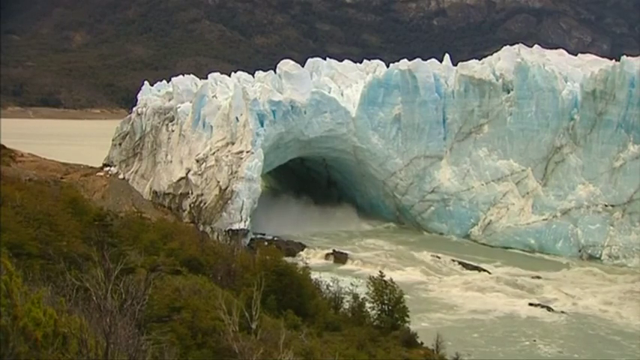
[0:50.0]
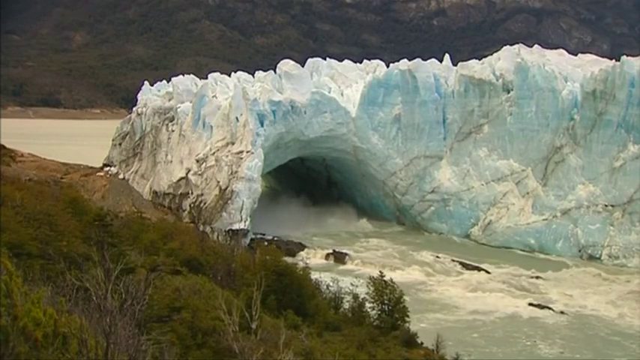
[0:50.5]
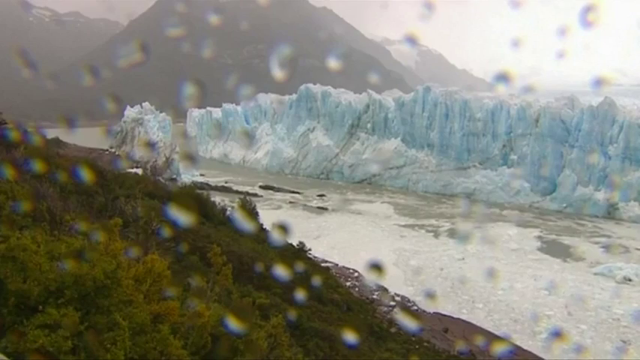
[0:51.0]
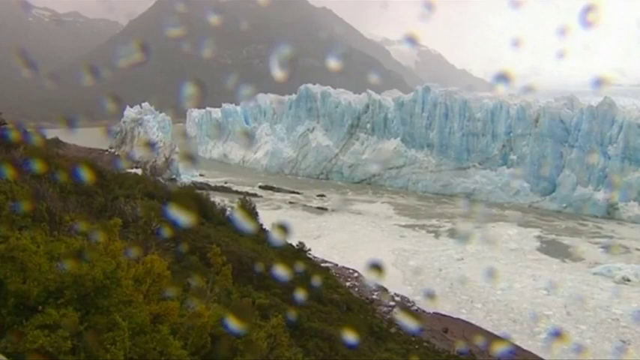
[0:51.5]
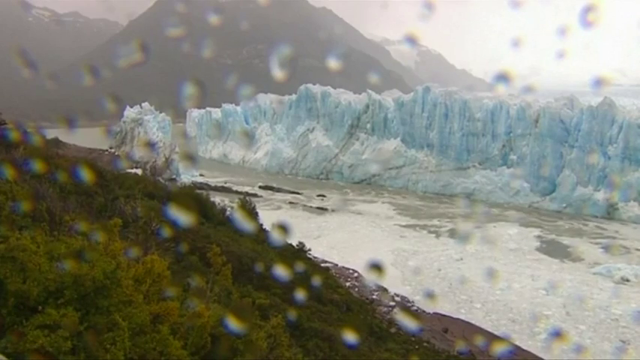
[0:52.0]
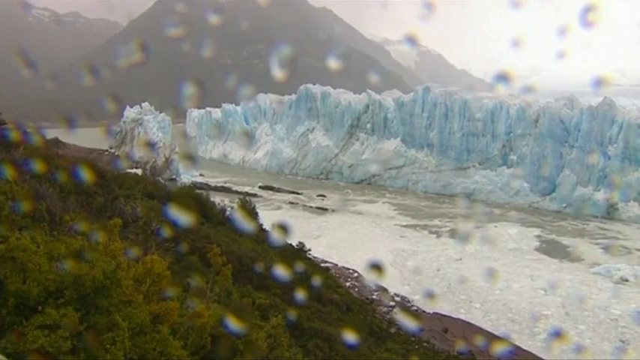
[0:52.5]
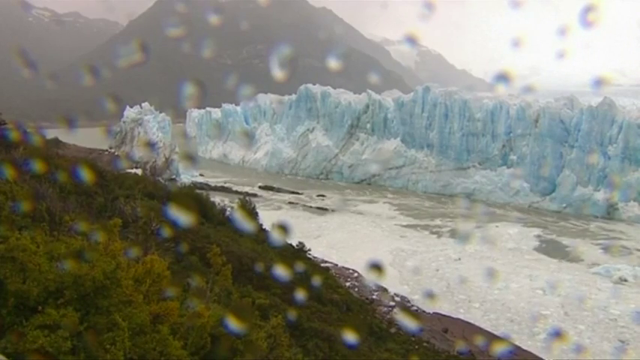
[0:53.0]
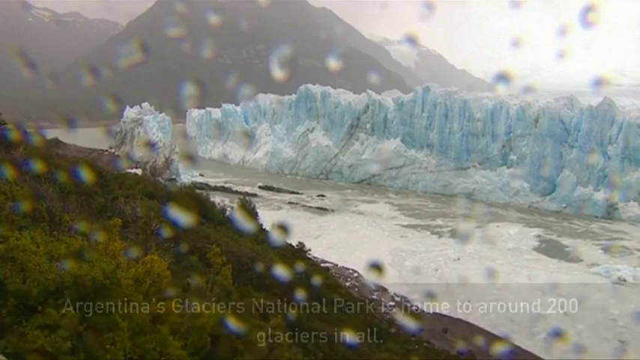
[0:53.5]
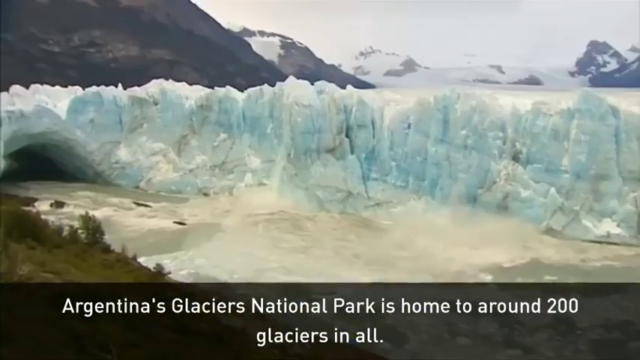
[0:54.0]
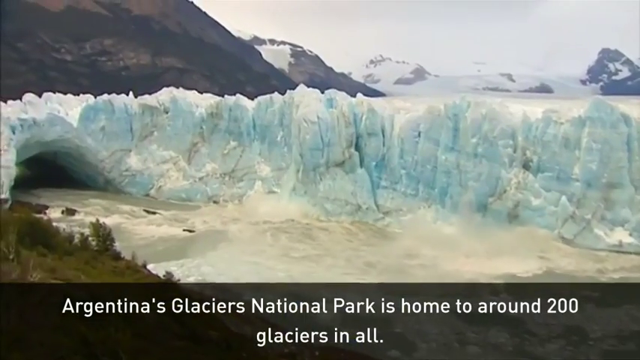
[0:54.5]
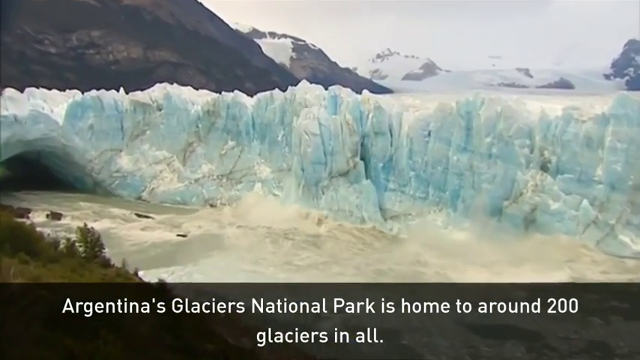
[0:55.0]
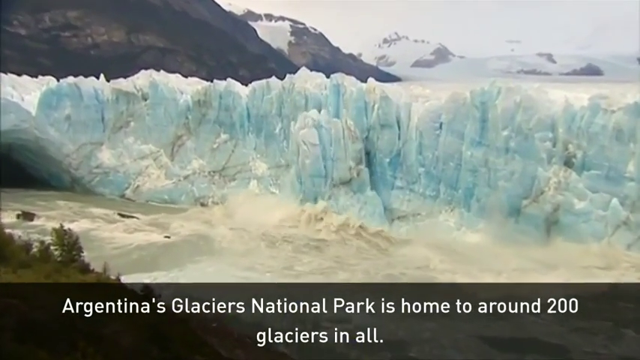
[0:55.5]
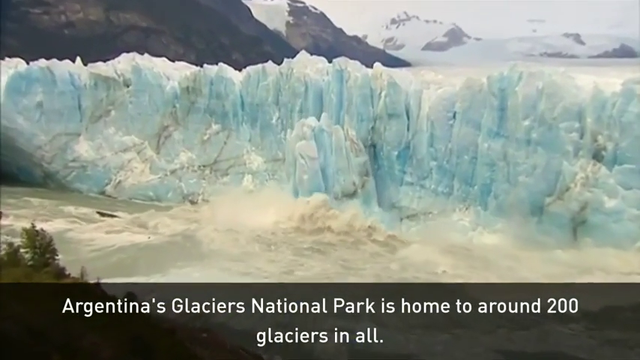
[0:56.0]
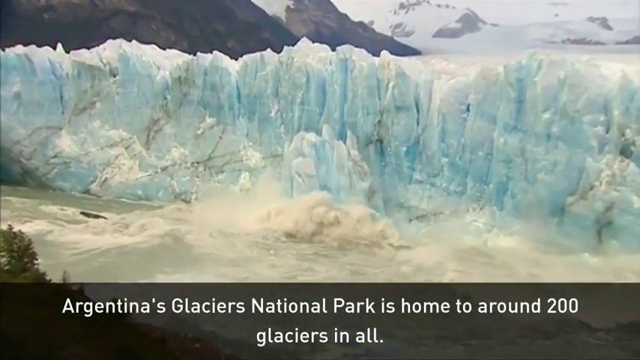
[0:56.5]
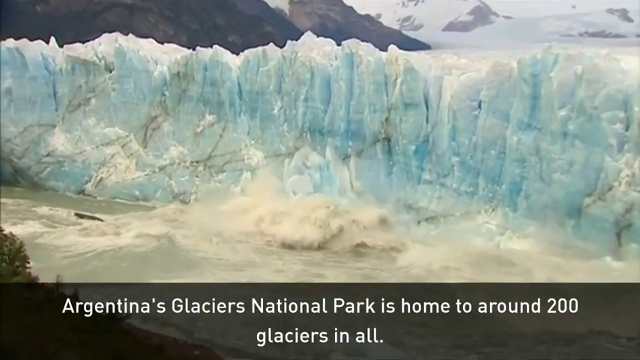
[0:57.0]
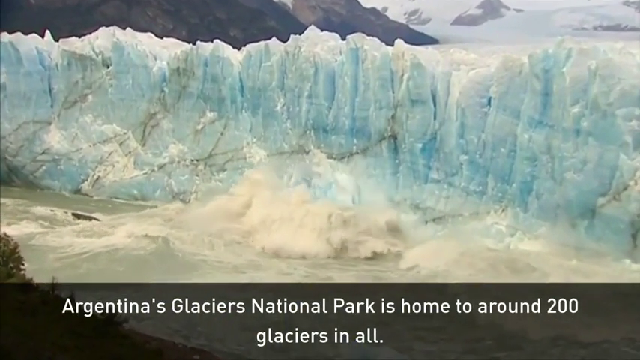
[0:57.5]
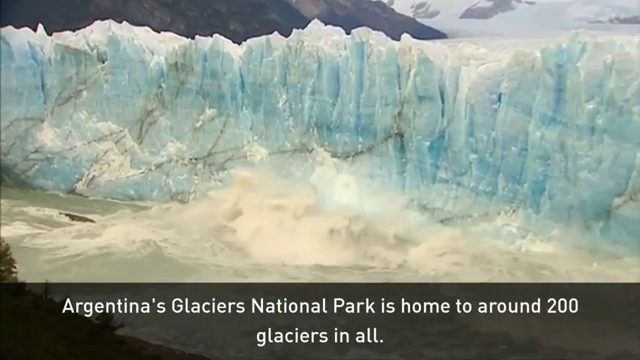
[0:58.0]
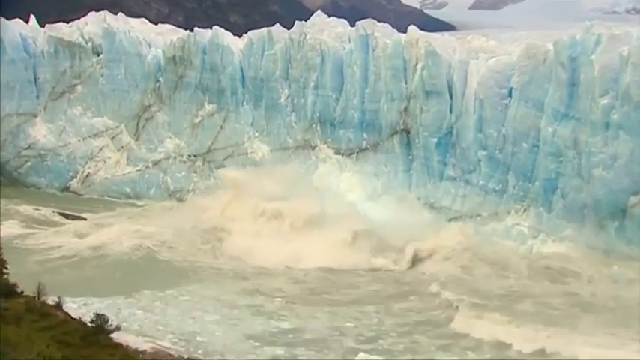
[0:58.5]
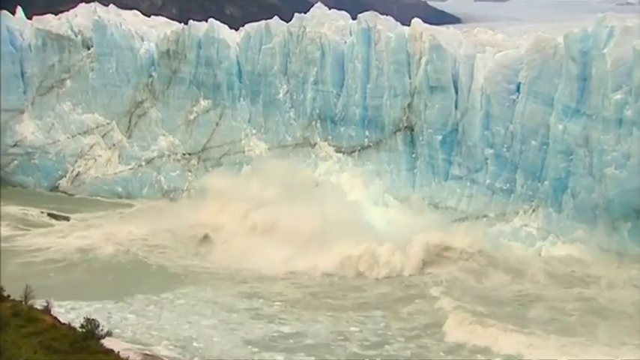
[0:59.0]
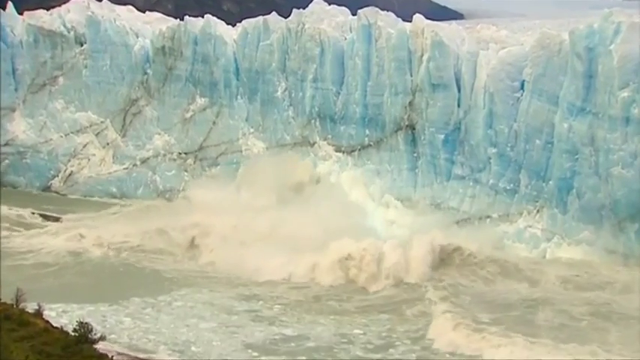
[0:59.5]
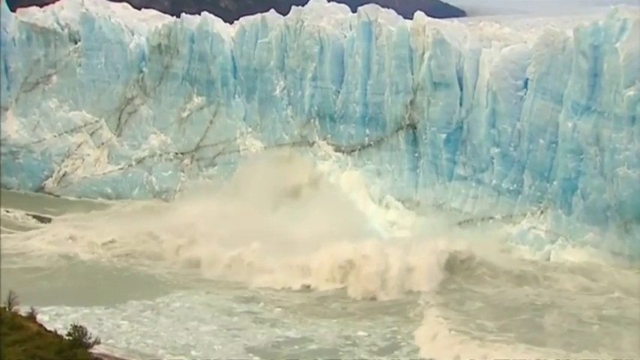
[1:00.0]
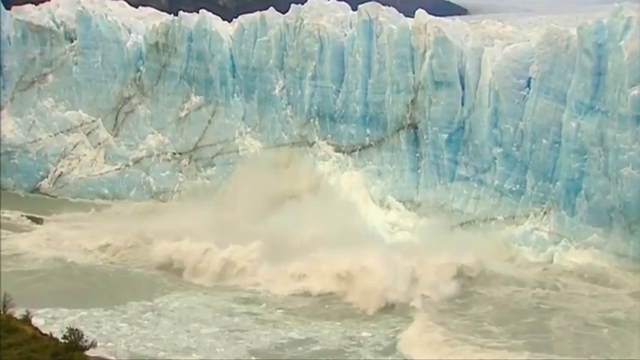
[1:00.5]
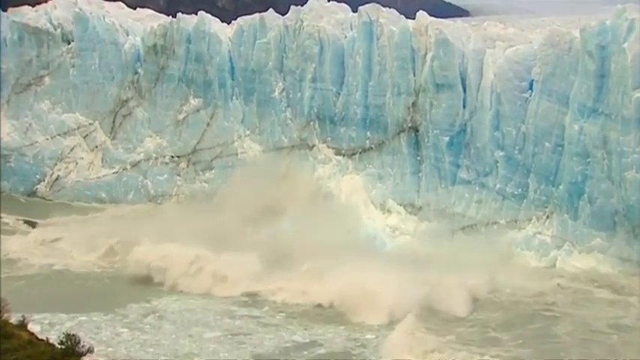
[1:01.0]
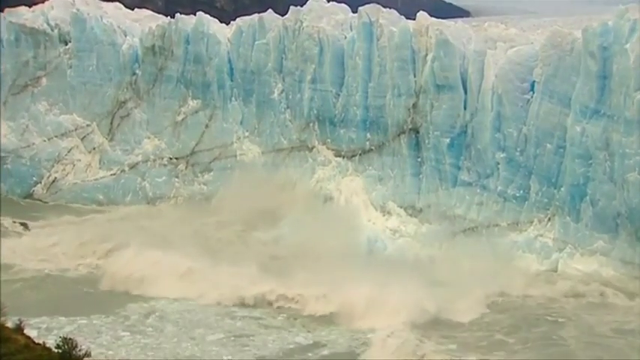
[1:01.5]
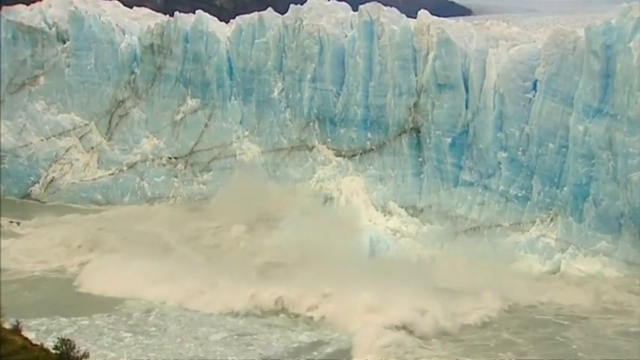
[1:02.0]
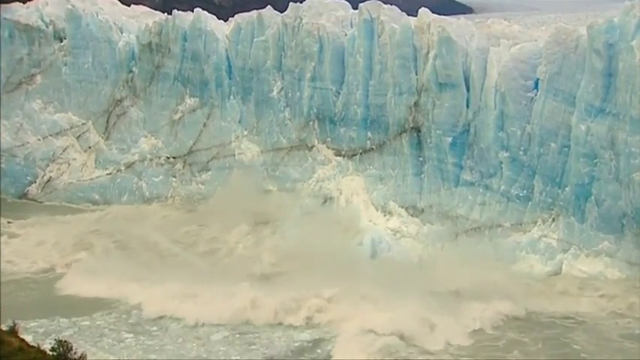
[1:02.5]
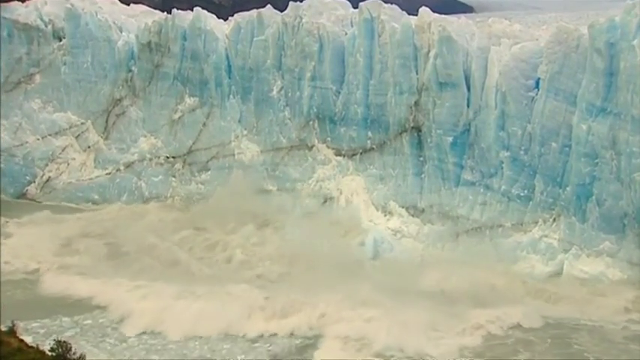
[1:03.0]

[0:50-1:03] Part of the tunnel falls into the water, producing a splash not nearly as large as the earlier ones, but still a splash. The video then transitions to a different shot. In the far background, across the other side of the river, huge chunks of ice run along the water. On the near side, little sprinkles of water are on the camera lens, and there is grass; a river moves left to right. The view stays on the center part of the ice formation, where a big chunk of ice falls into the water, forming big waves and a large splash. This looks to be in slow motion as well. The top of the ice formation is white, becoming more of a light blue color further down before the water.